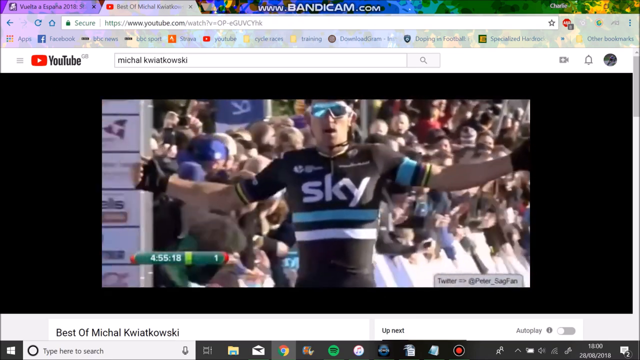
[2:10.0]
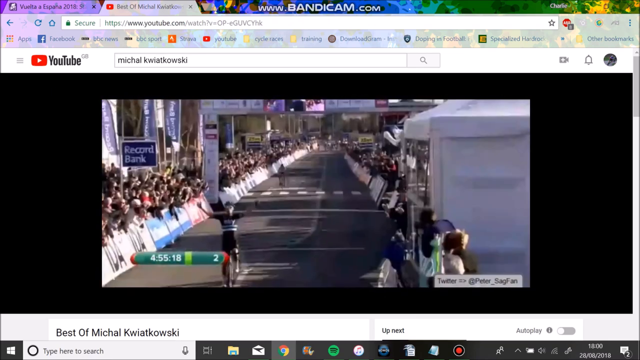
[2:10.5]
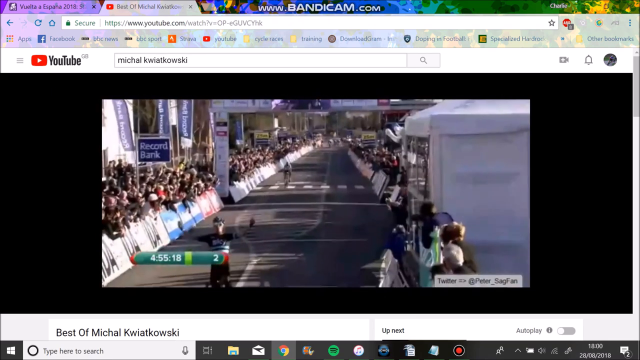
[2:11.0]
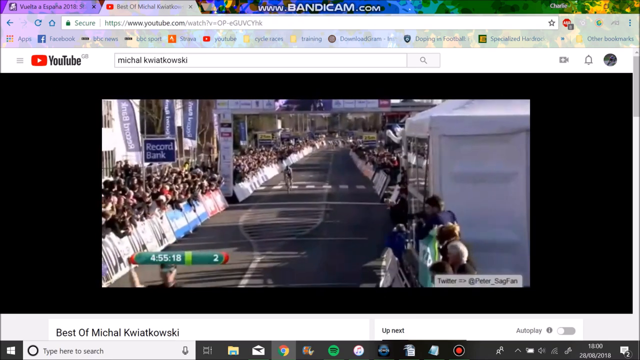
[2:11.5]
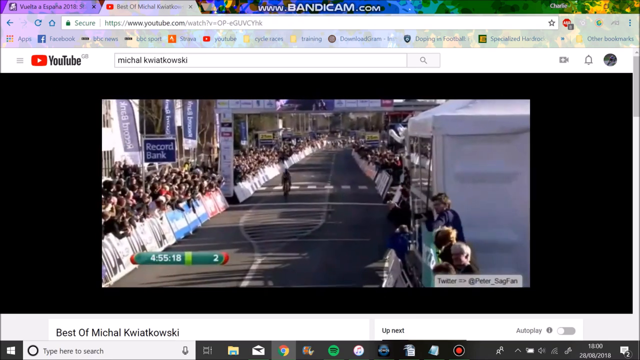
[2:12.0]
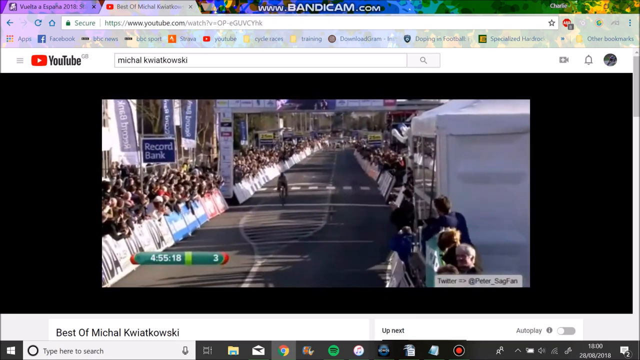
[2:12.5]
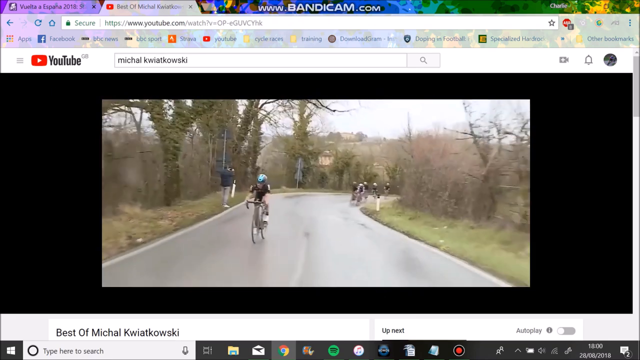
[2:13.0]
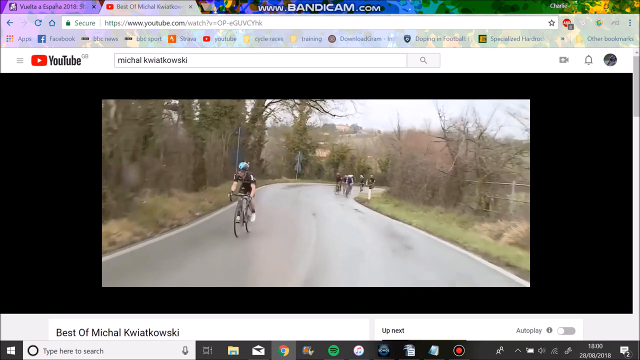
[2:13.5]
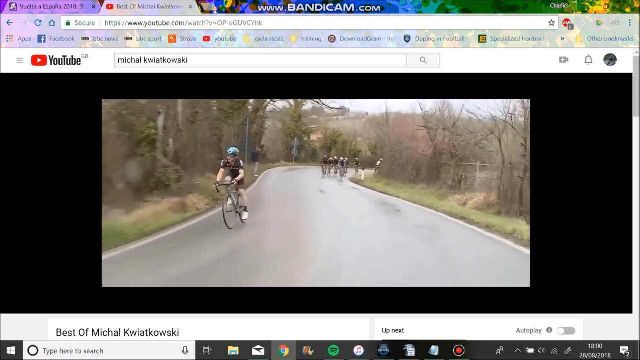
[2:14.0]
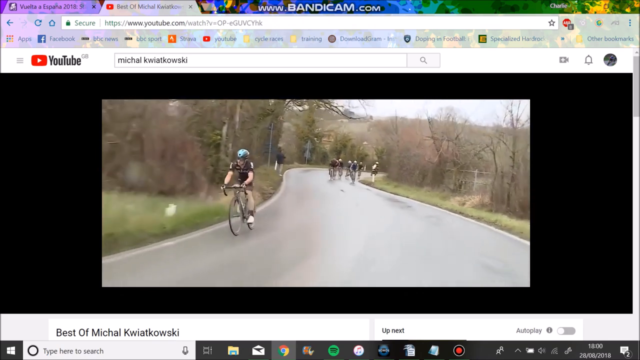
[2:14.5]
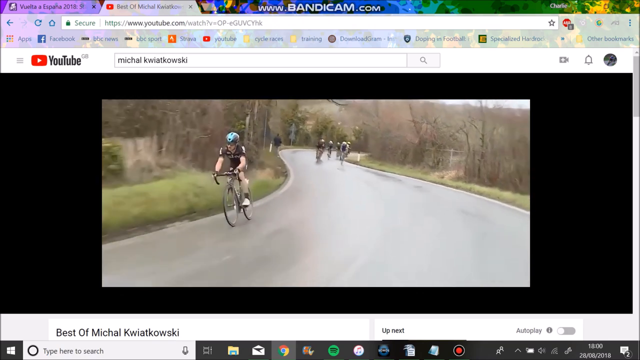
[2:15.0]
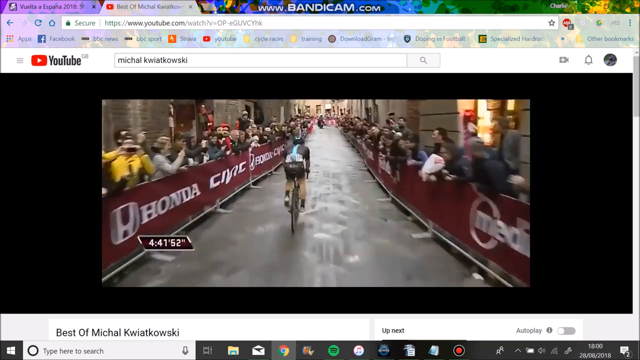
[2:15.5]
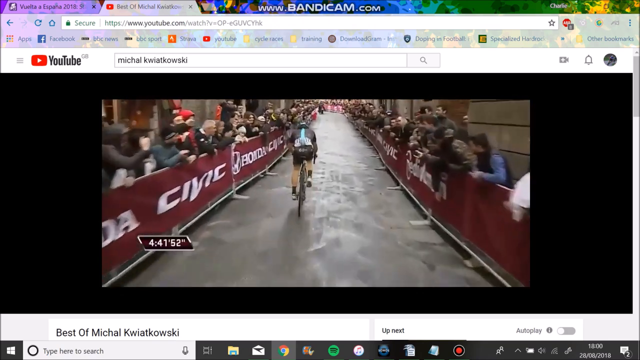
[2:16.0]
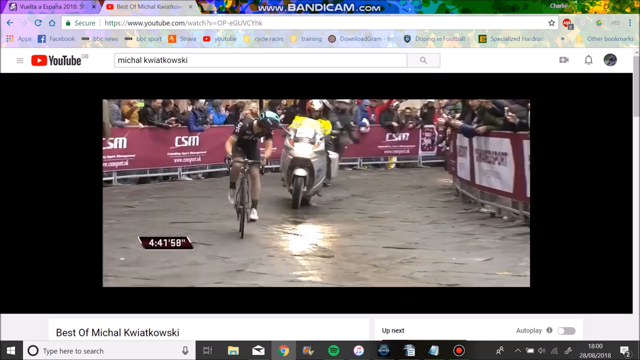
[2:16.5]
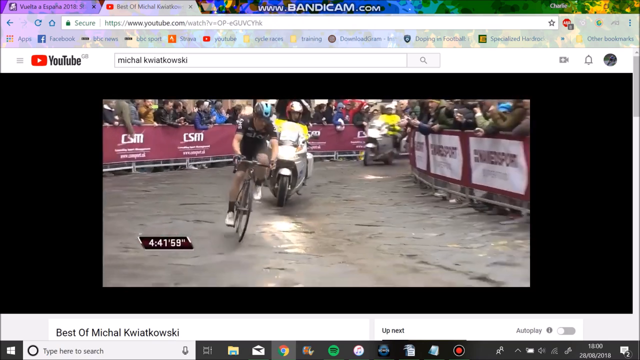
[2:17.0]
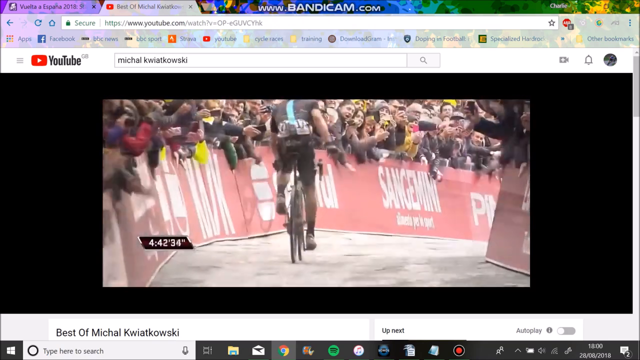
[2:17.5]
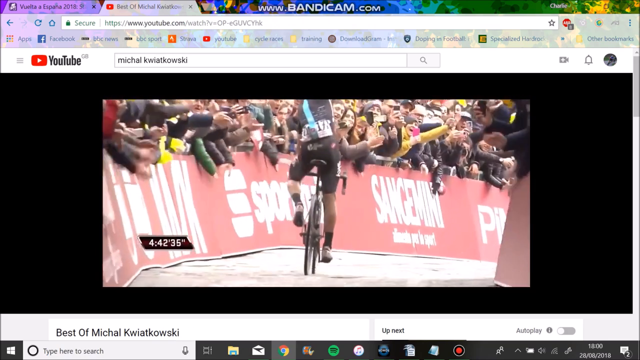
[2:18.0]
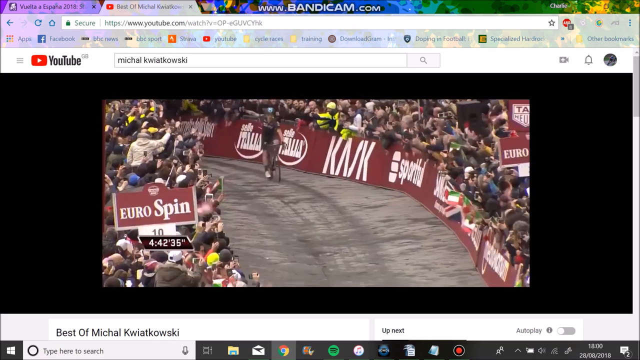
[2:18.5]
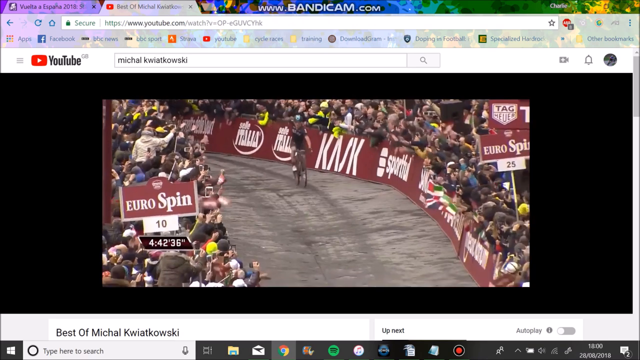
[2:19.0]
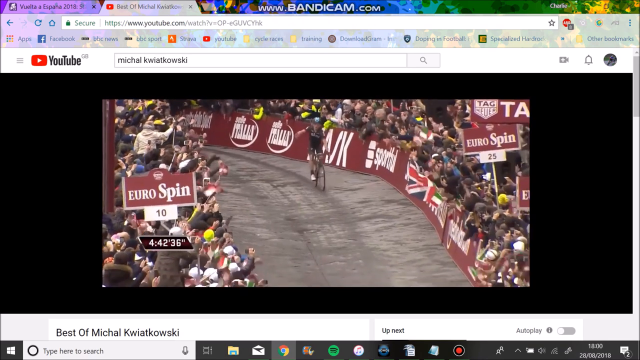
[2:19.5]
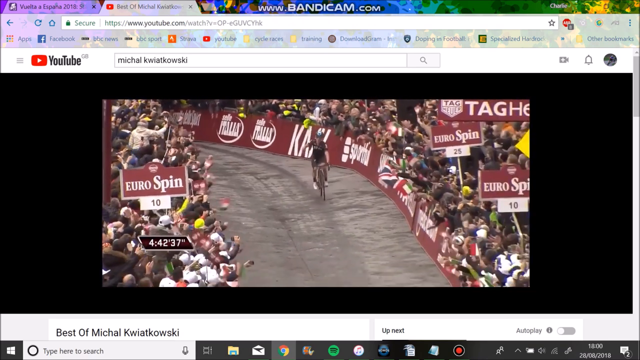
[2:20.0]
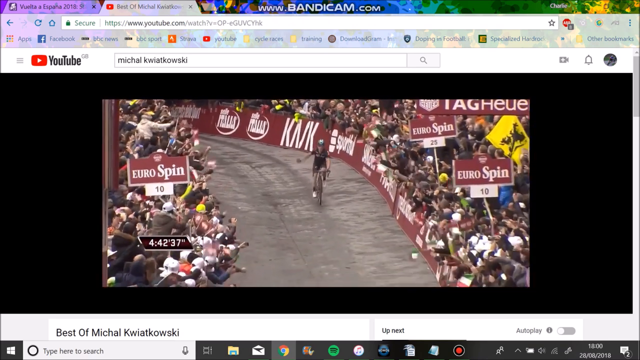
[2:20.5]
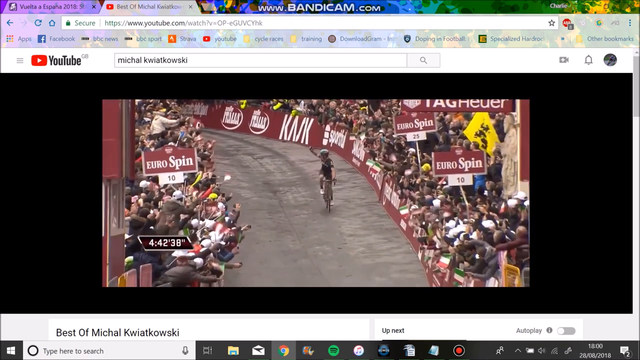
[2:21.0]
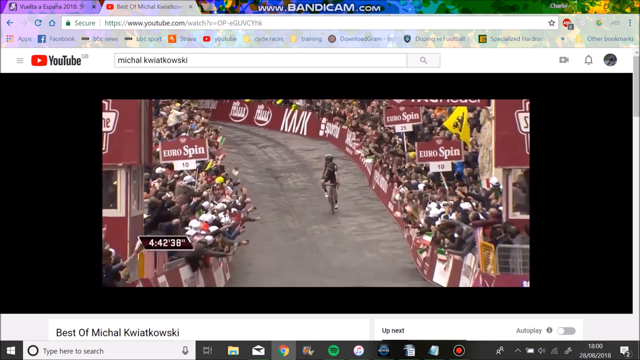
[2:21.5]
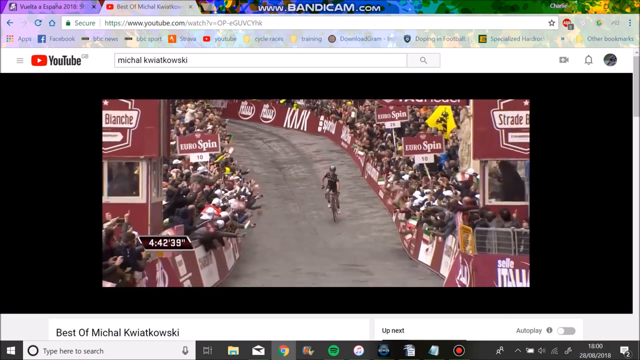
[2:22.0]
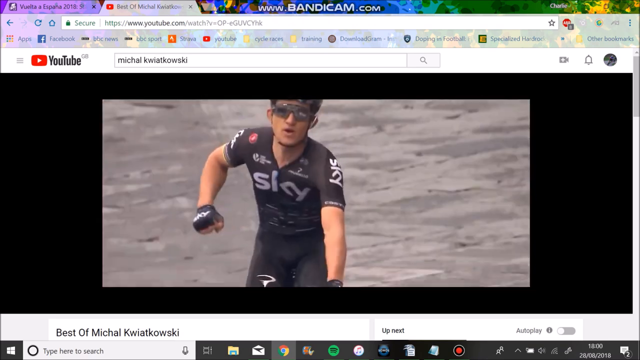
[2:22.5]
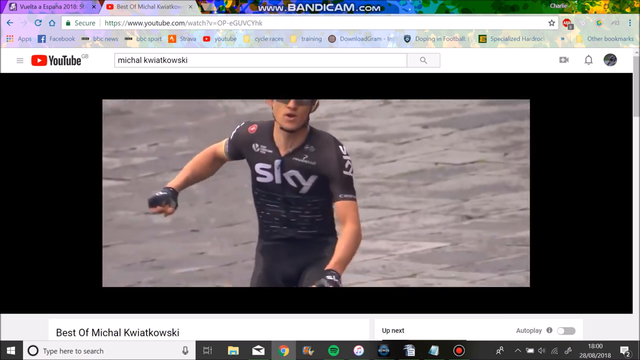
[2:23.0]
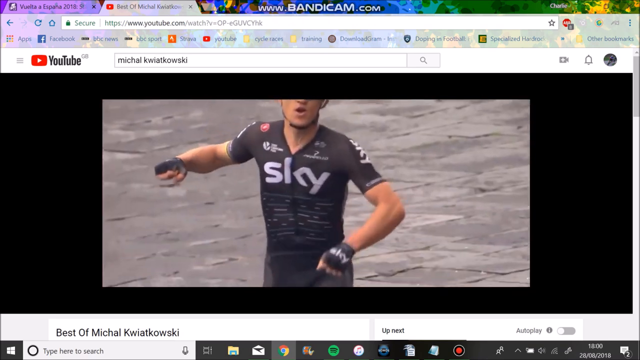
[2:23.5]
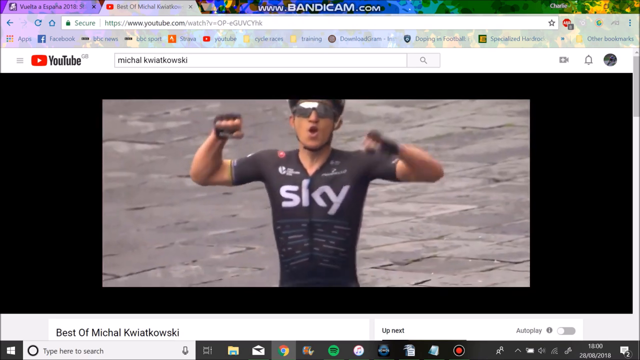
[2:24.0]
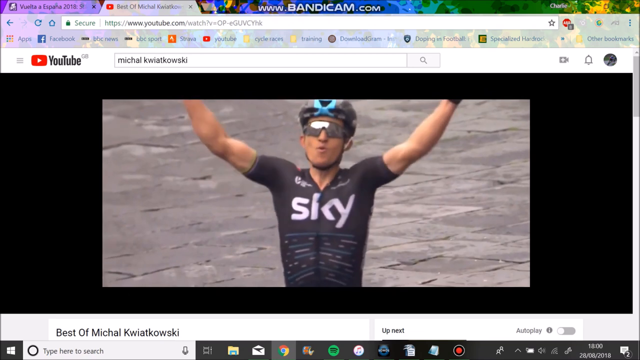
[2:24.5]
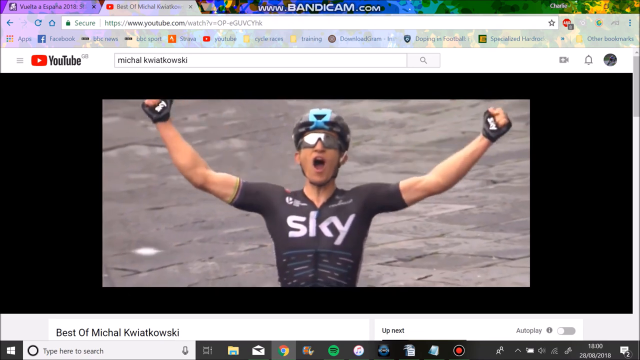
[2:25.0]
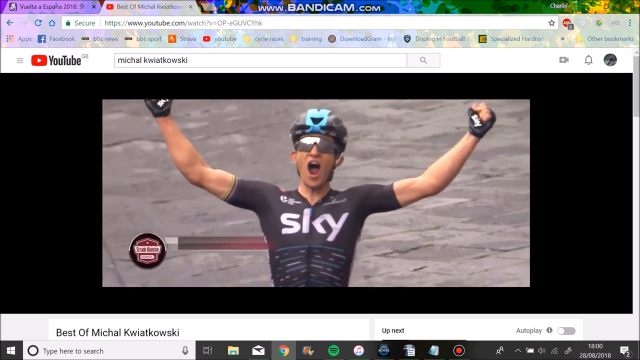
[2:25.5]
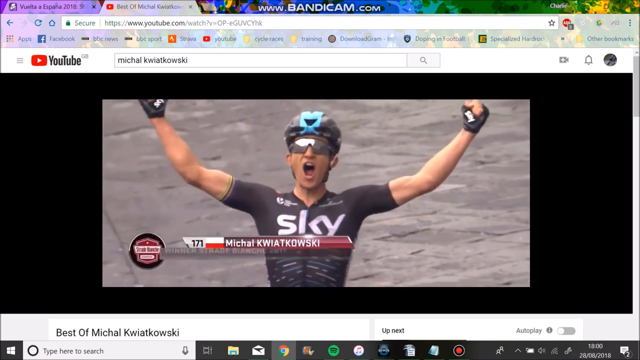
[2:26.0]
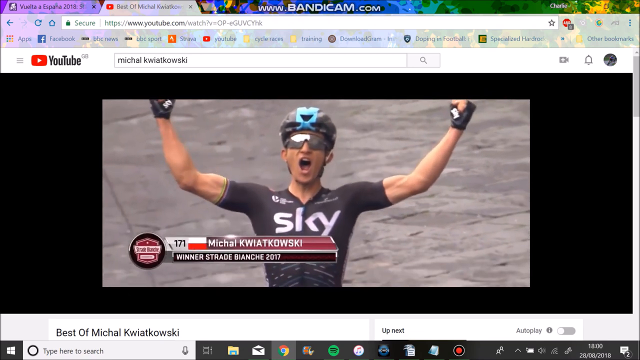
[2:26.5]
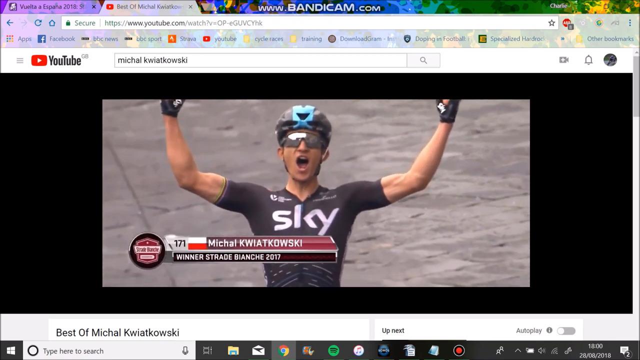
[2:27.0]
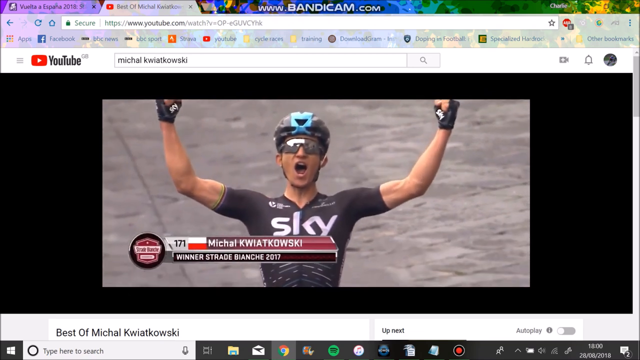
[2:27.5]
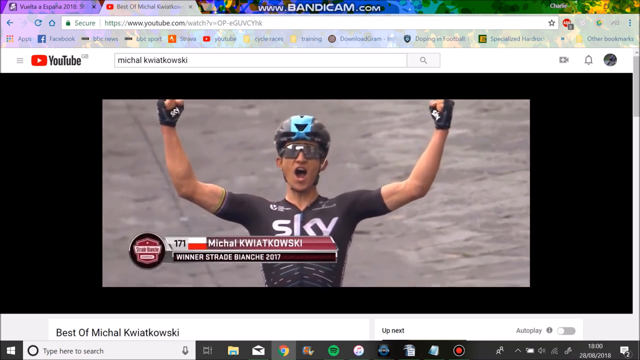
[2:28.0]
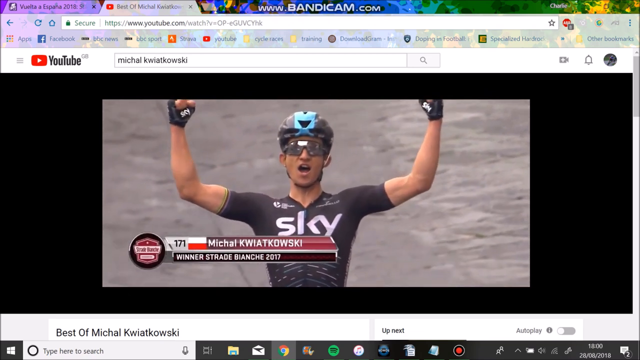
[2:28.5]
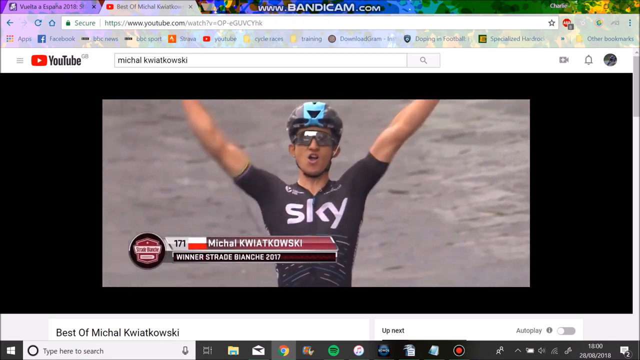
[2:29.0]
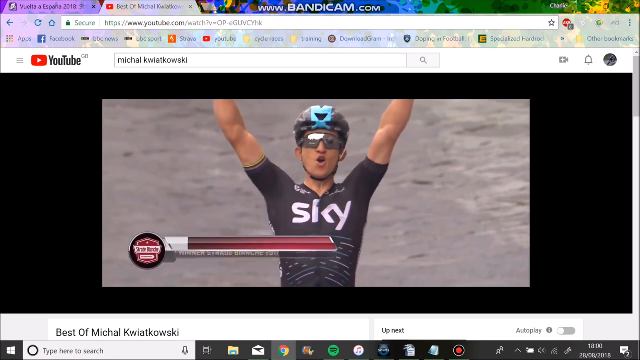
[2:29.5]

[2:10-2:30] The video continues with Michael Kwiatkowski biking and finishing a race. It then cuts to footage of riding on a road in what looks to be a wooded area, with trees around, where he is far ahead of the group behind him. Another angle shows a first-person view looking at the rider in front. Multiple motorcycles ride behind Michael, and large crowds stand outside the racing area cheering him on, with multiple signs in the crowd. He waves his hands up to get the crowd excited as he heads for the win. A close-up shows Michael in a black shirt with "sky" written on it and a blue helmet, putting his arms up in victory. He appears to be from Poland, his number is 171, and text reads "winner" with the year 2017.